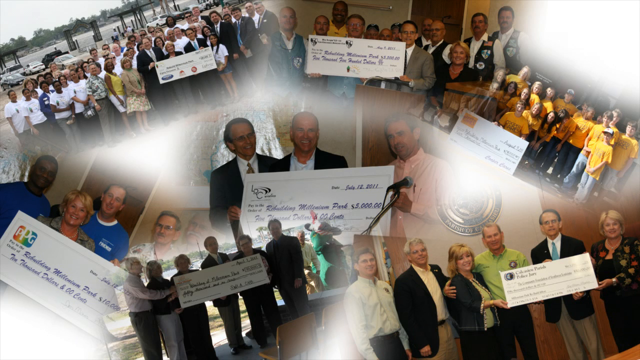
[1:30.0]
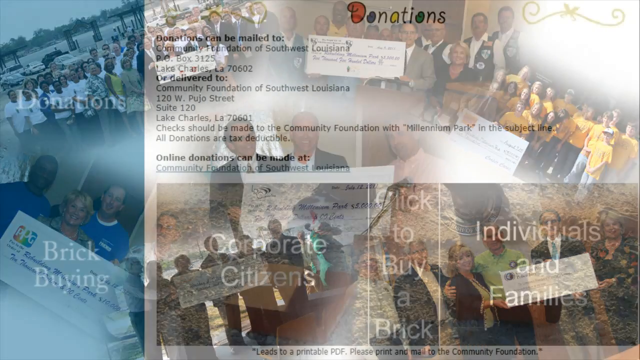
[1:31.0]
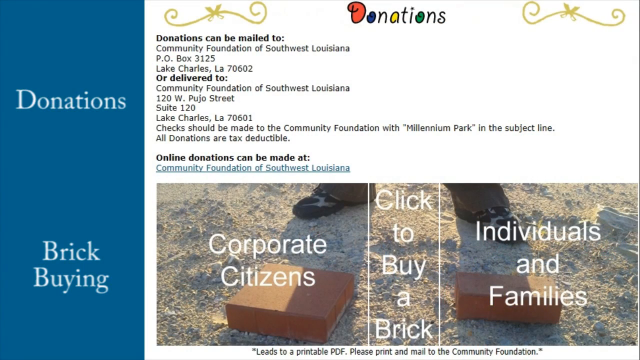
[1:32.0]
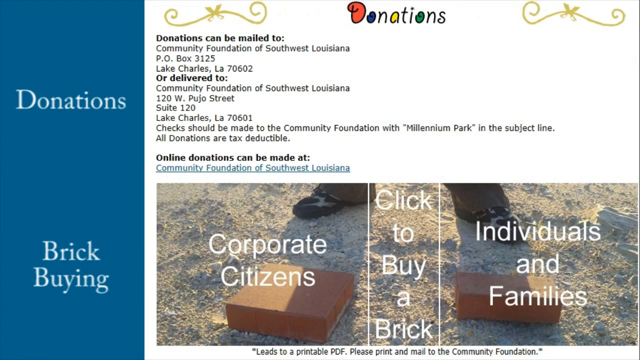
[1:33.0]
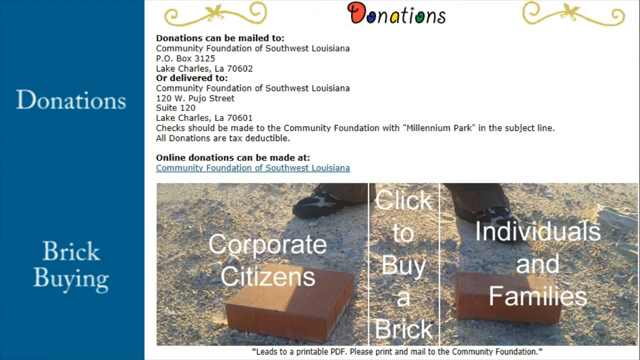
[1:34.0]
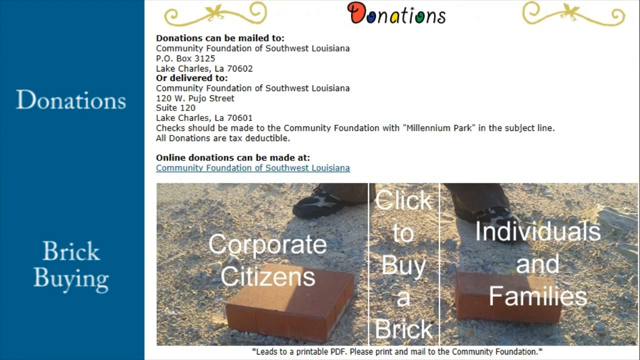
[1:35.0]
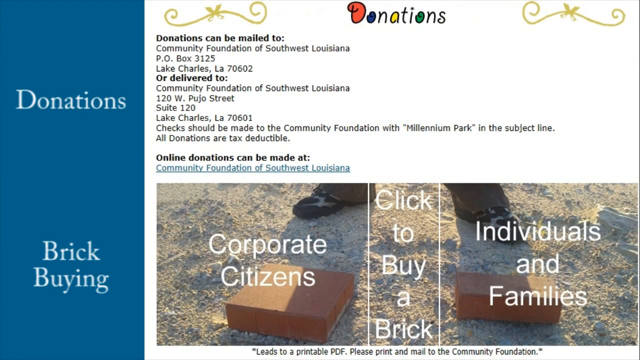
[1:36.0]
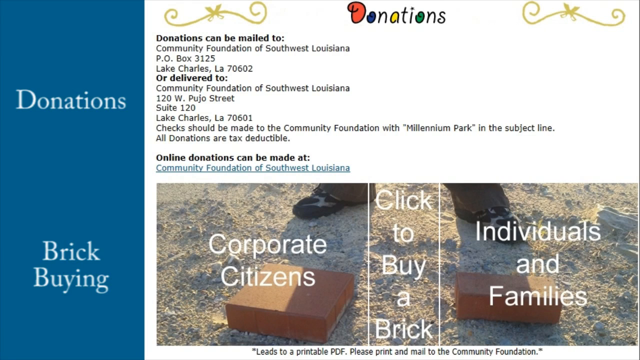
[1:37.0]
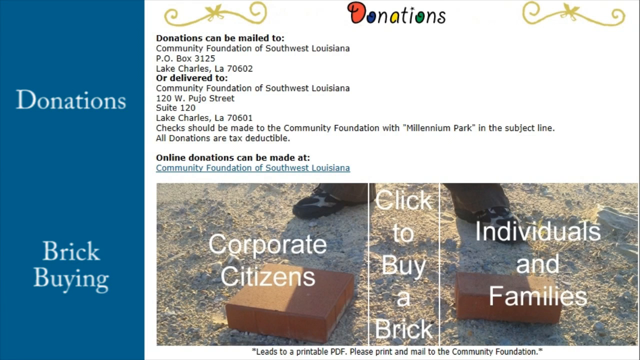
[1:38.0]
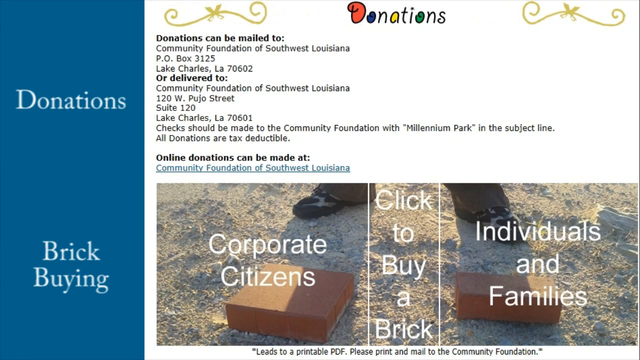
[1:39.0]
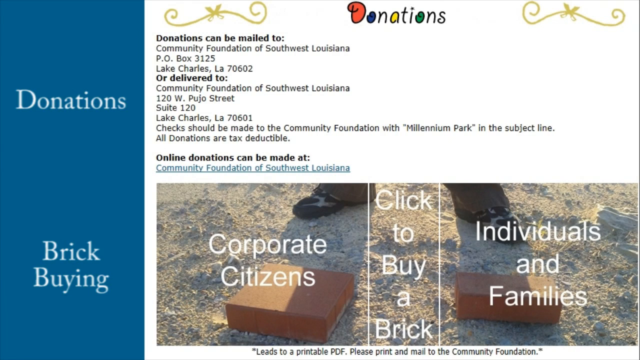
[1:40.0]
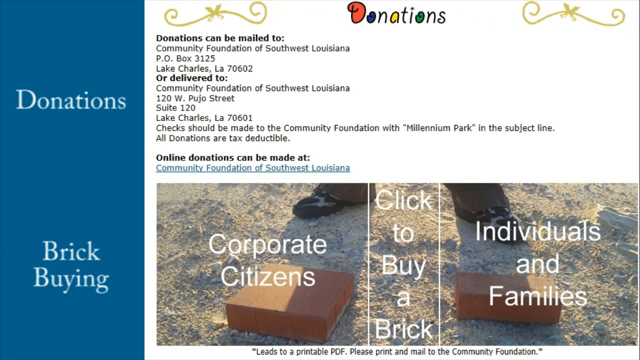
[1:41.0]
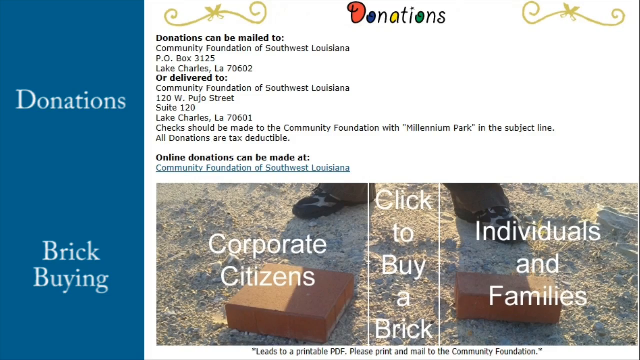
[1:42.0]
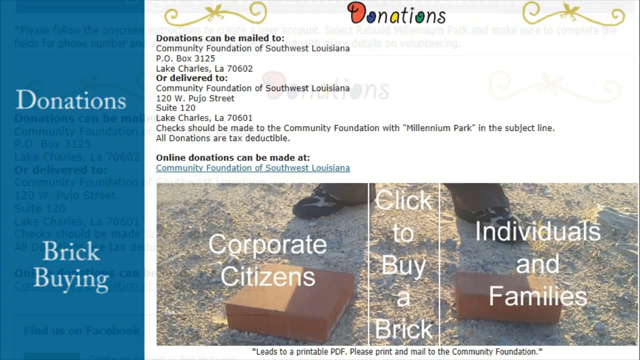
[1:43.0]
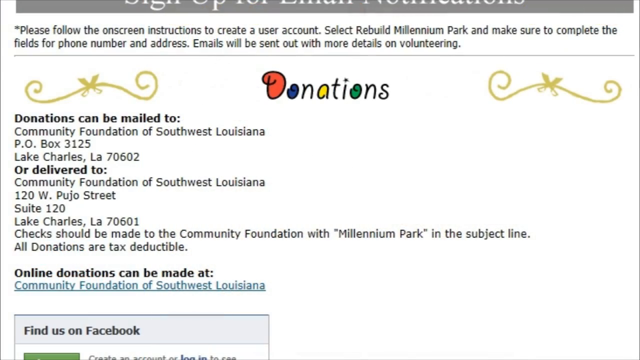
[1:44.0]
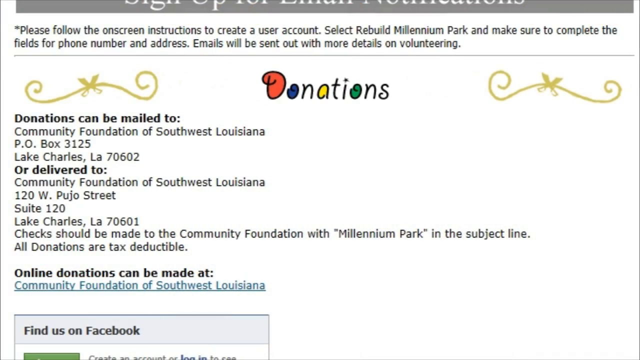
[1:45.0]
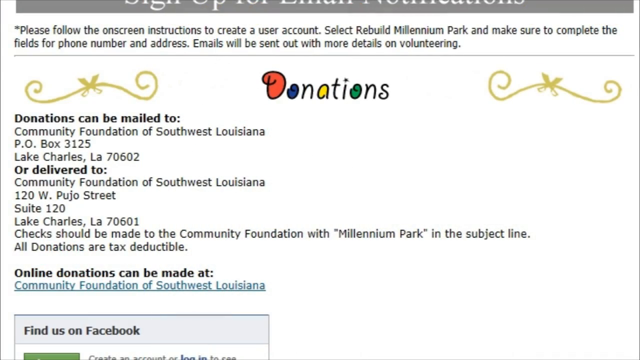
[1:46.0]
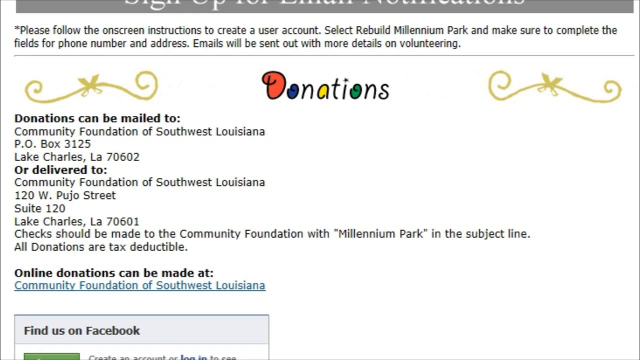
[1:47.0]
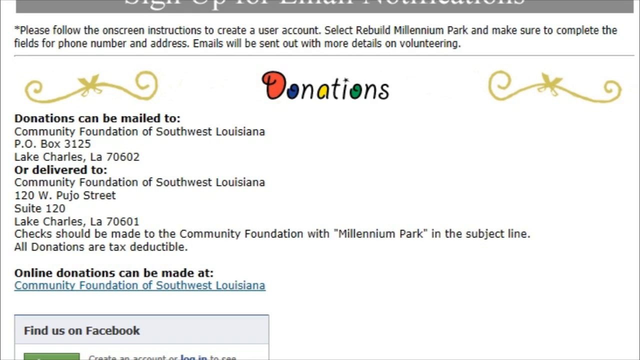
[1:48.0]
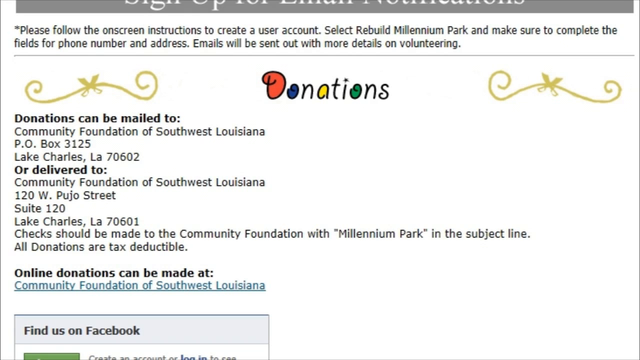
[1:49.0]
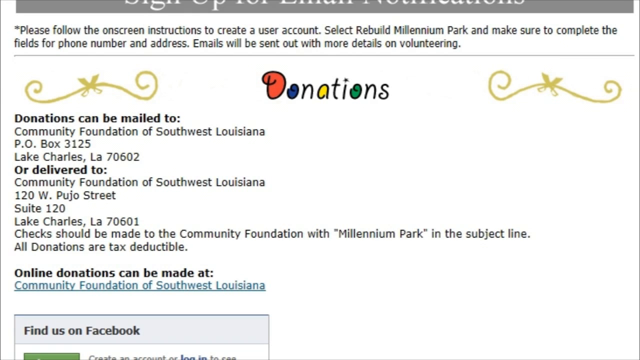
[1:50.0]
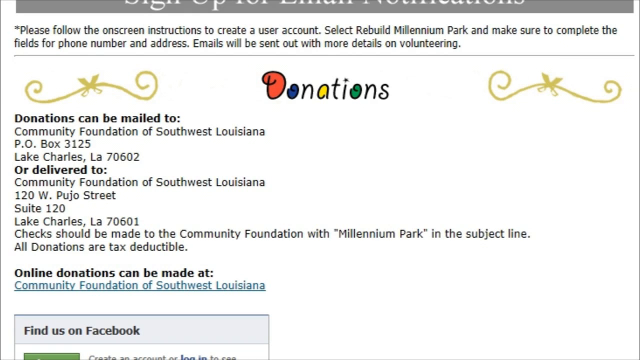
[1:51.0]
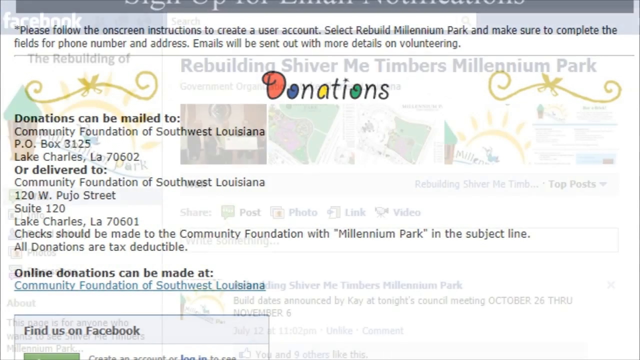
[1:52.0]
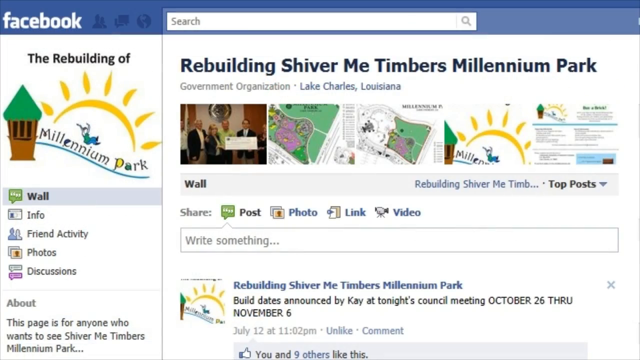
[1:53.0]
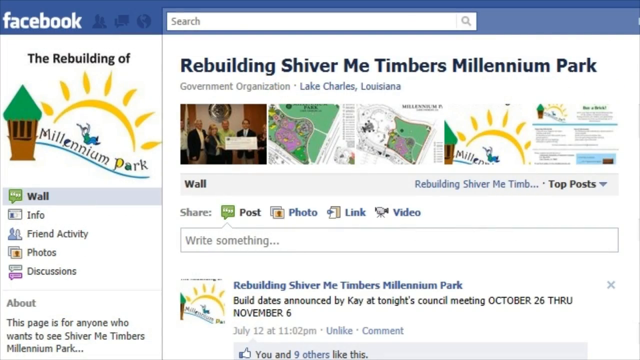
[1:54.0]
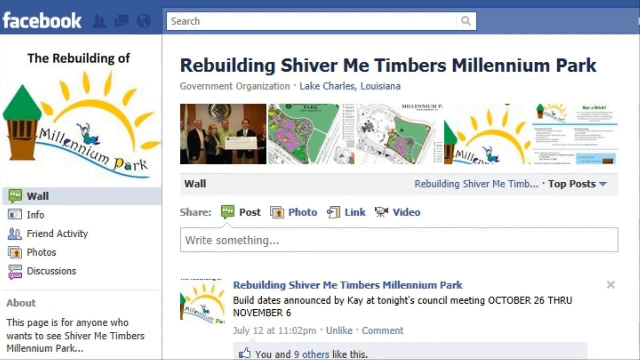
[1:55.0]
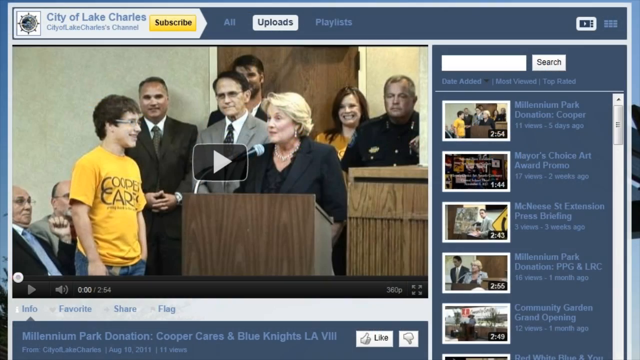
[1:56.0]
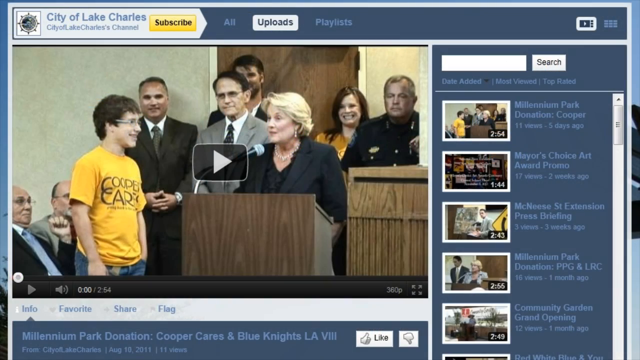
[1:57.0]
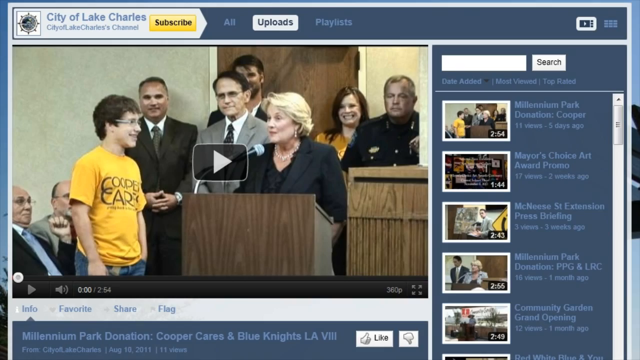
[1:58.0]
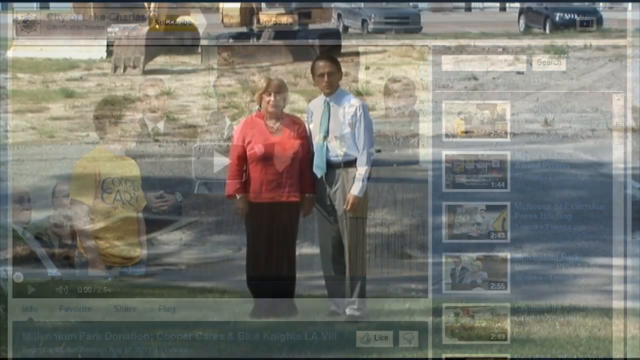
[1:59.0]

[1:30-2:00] Pictures of the volunteers are shown, followed by donation information: donations can be made to a community foundation, with a box number 3125 and an address given, and online donations can also be made. The form and format for making donations toward building the park are shown on screen, including the instructions "Please follow the on-screen instructions to create a user account. Select Rebuild Millennium Park".